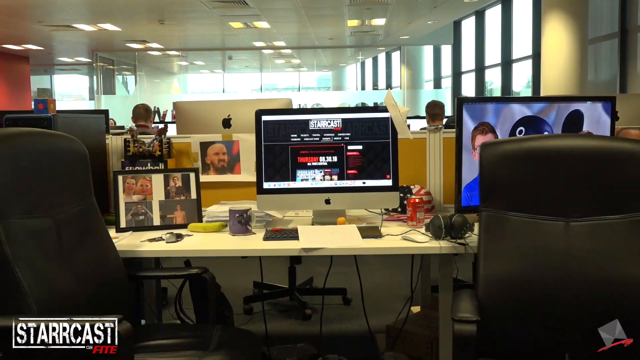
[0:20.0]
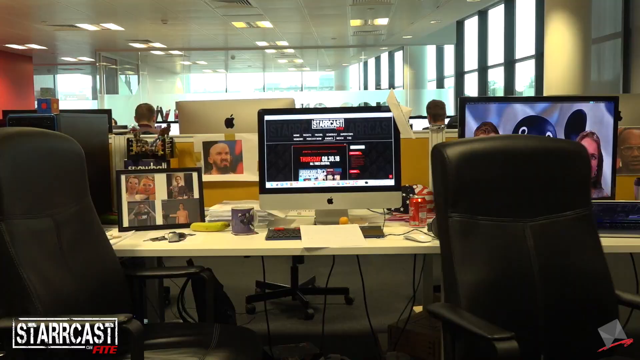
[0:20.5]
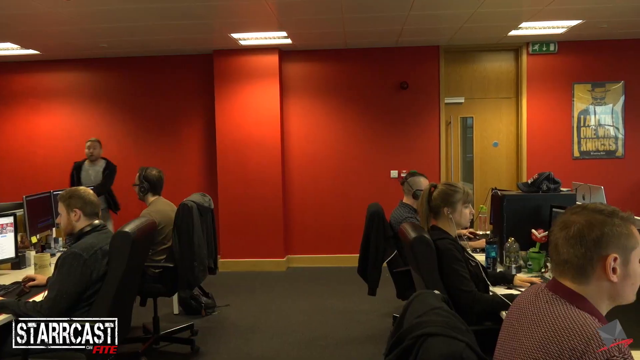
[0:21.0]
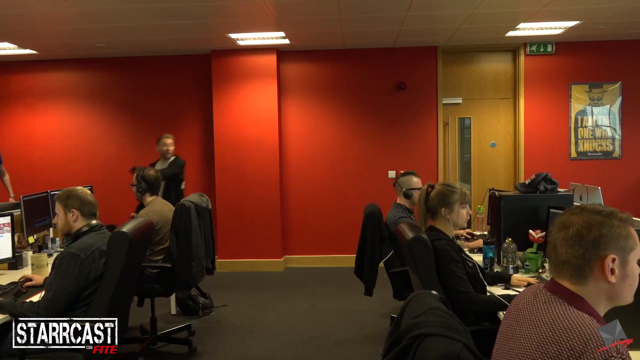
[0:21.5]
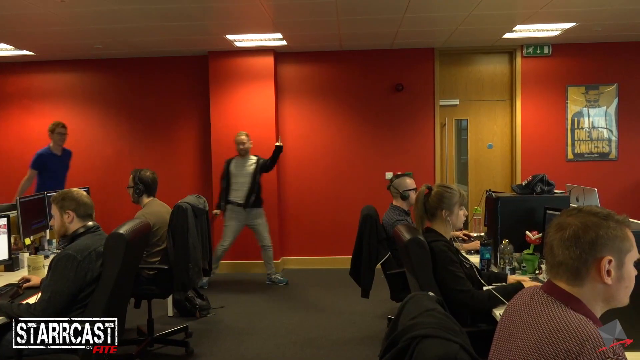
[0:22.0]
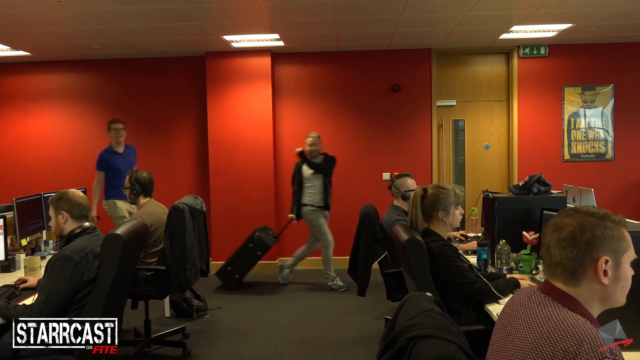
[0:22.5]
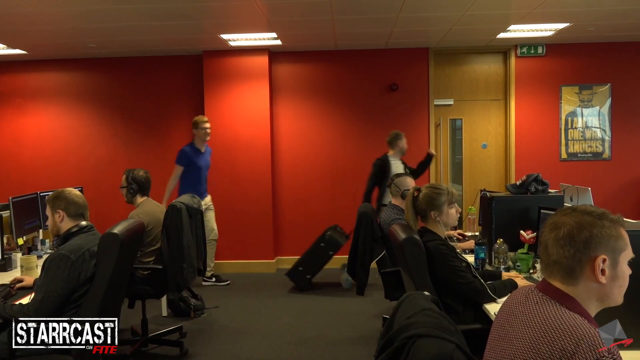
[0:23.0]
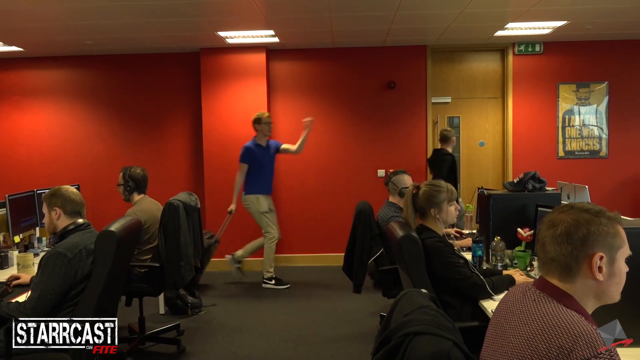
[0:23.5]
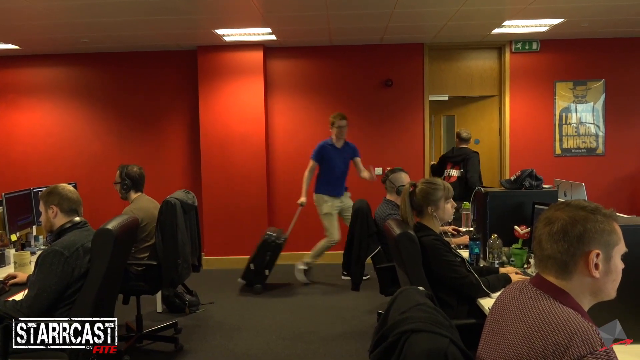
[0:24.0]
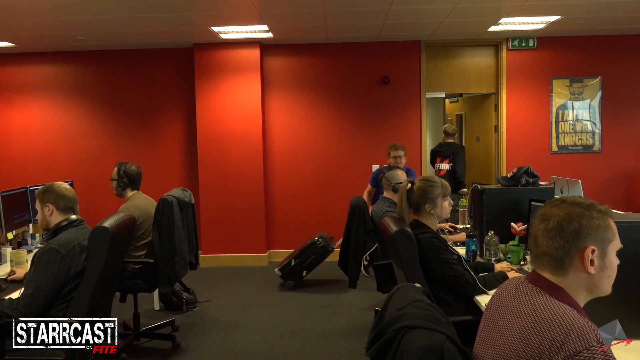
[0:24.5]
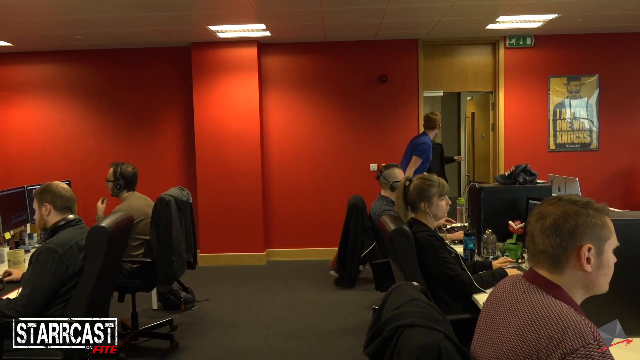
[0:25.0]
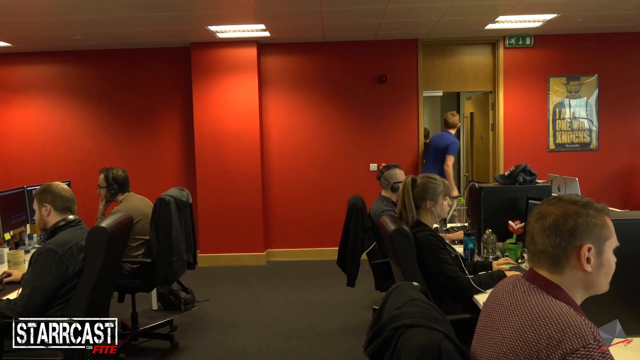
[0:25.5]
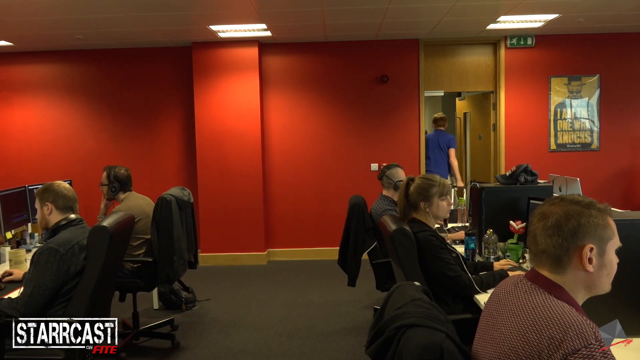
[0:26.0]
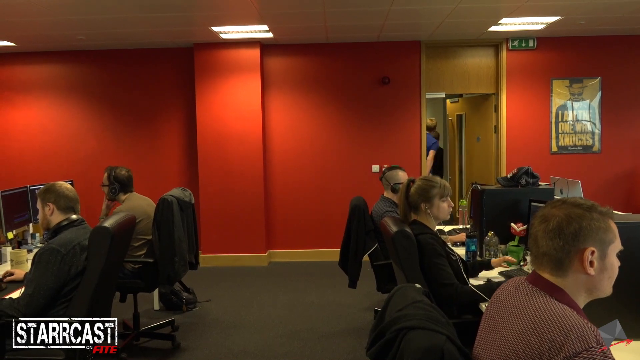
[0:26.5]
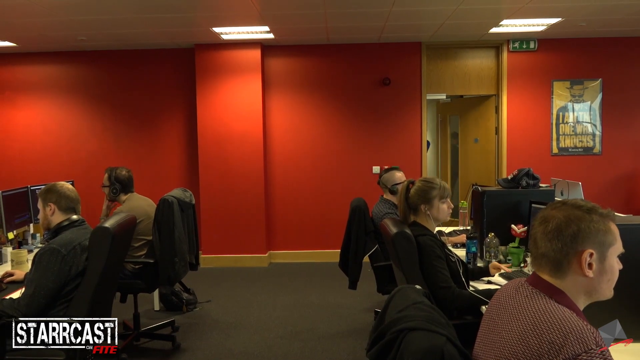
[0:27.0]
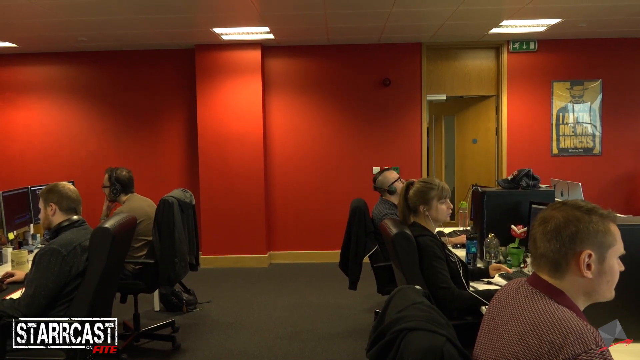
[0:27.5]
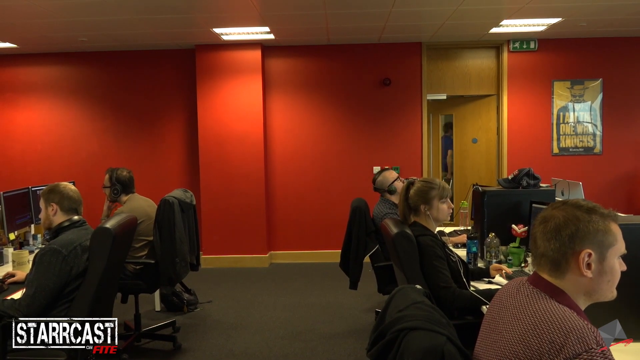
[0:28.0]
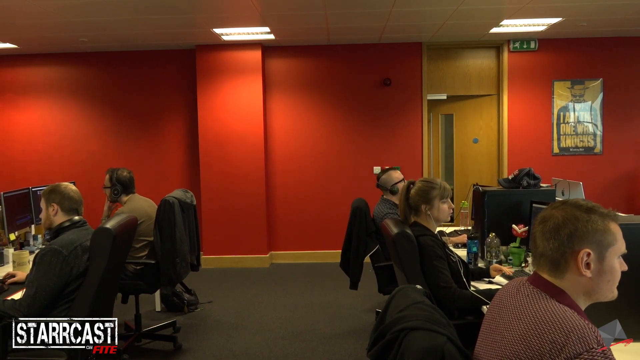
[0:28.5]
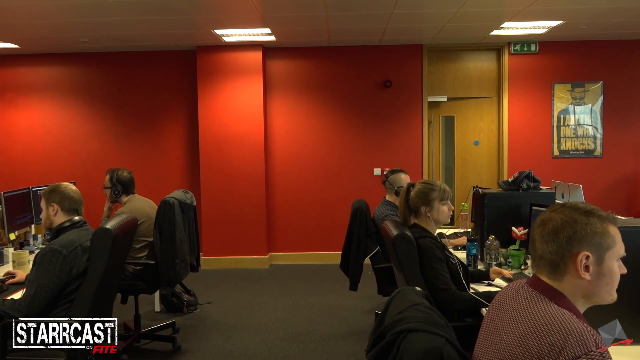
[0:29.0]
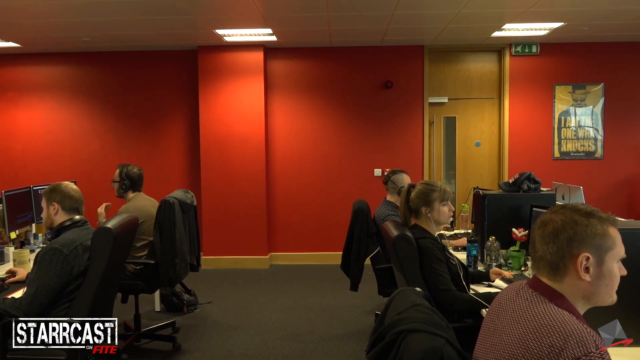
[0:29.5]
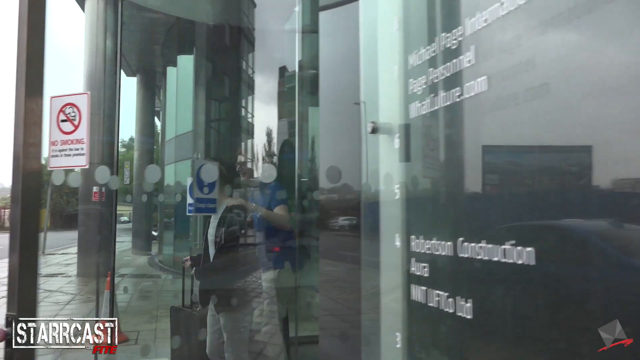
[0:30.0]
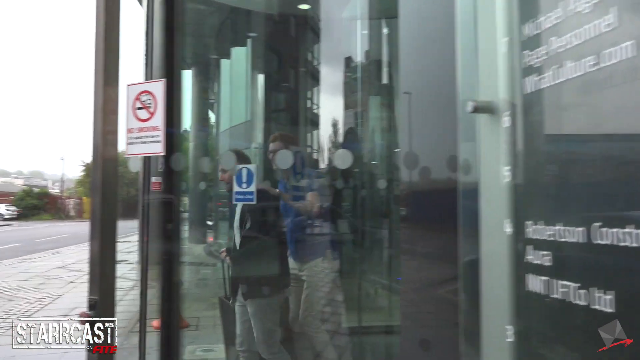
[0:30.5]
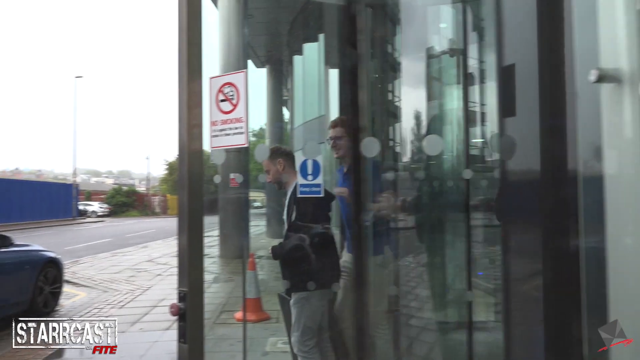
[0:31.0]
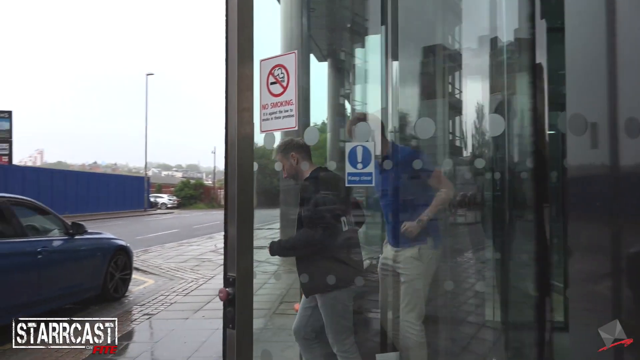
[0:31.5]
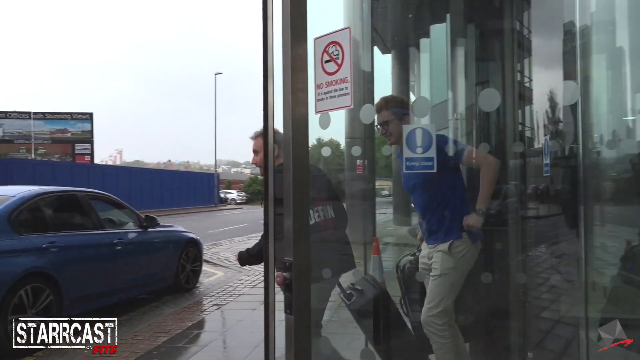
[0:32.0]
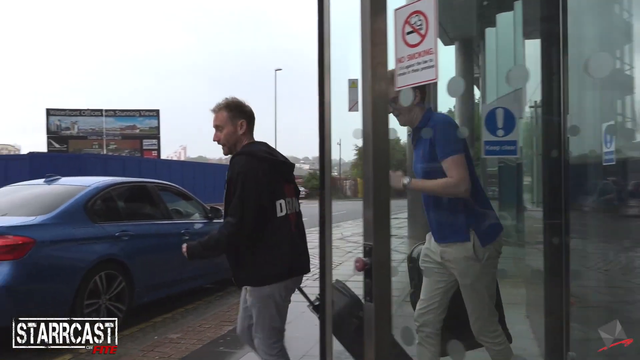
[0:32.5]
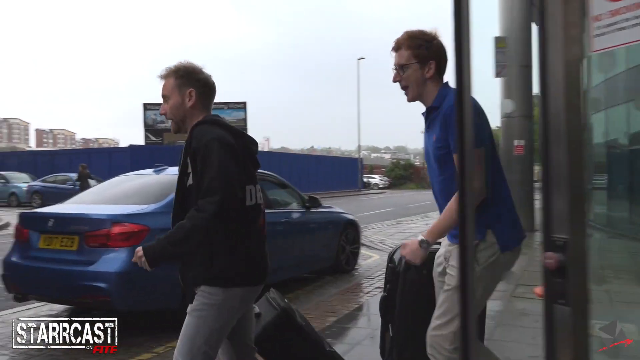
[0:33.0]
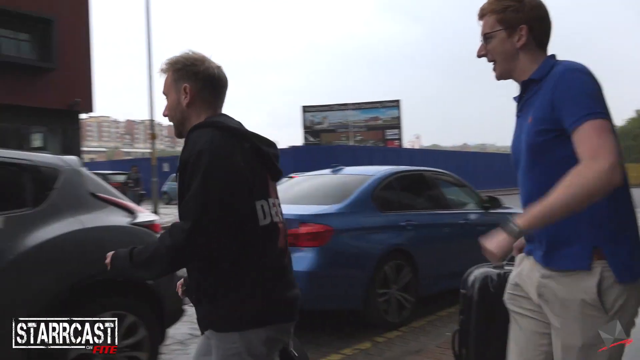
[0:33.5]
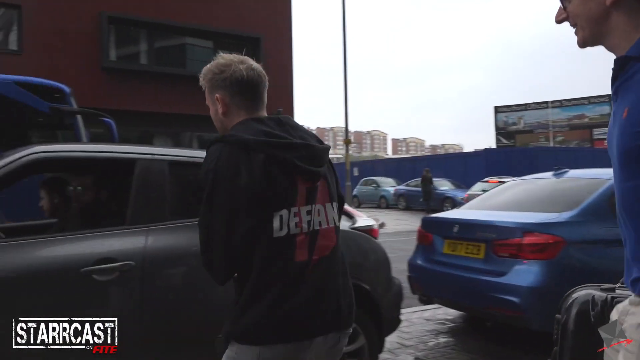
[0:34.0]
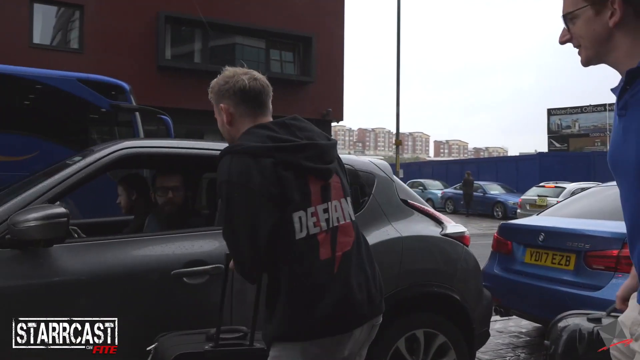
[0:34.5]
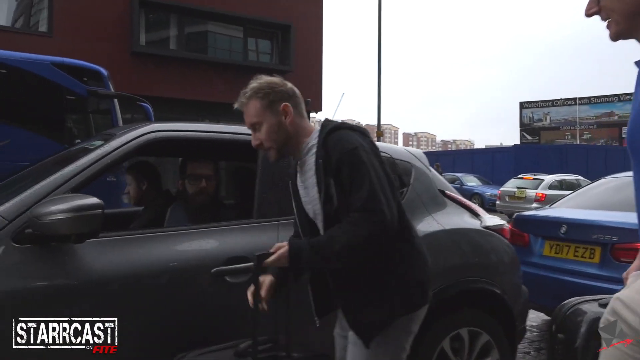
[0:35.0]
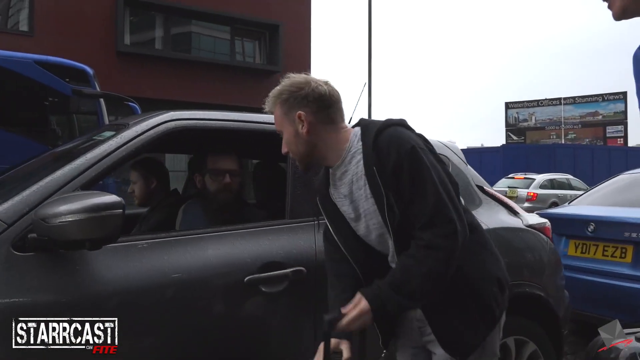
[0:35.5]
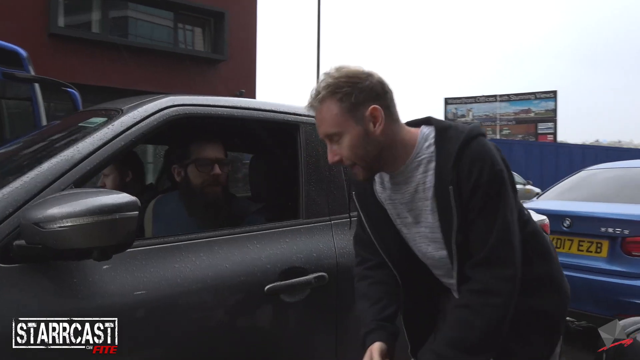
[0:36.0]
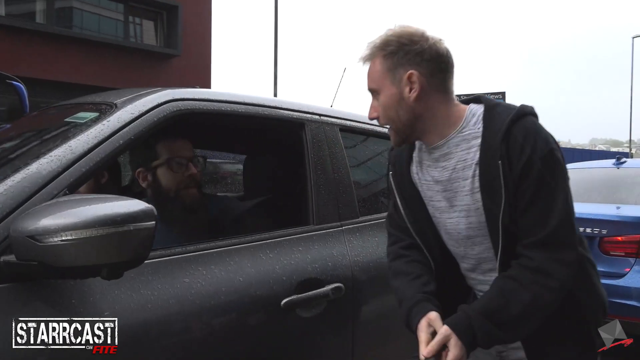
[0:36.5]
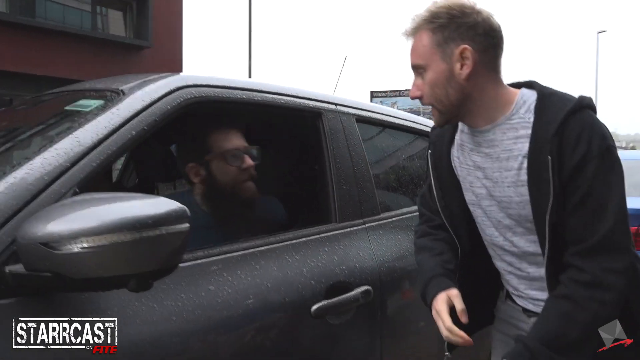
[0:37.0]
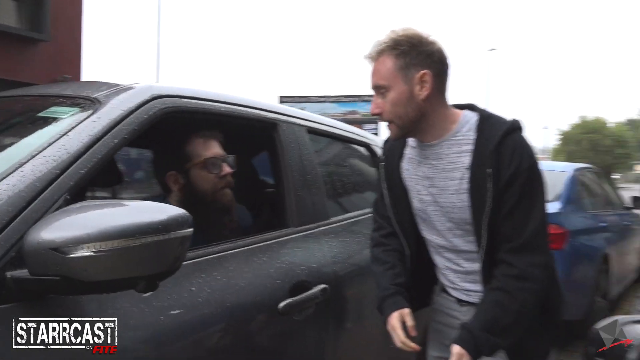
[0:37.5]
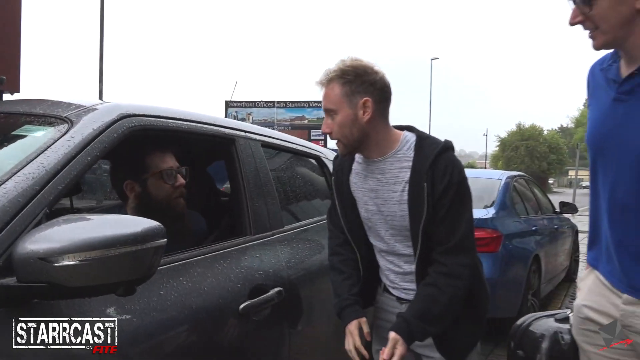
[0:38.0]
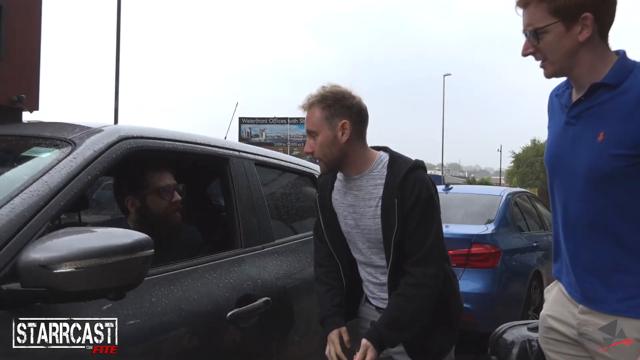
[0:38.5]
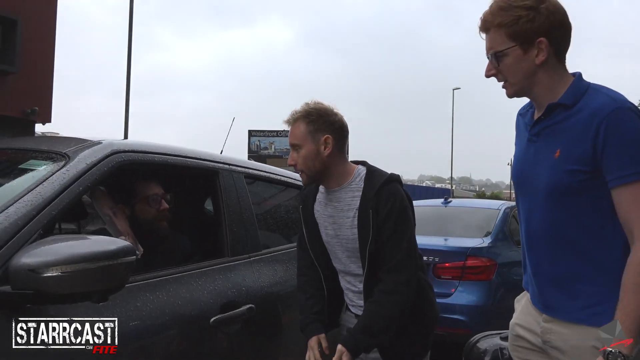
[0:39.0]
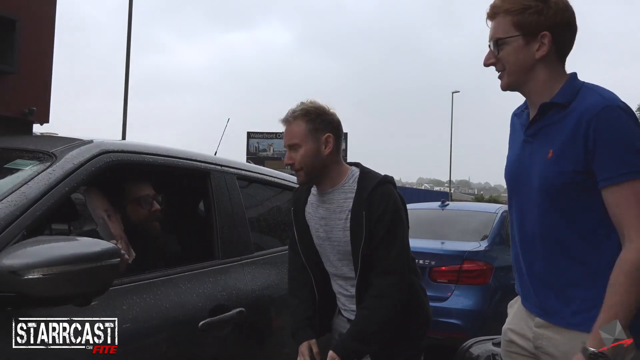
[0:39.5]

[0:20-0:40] In an office, two chairs are still moving, just vacated by two men. The men have suitcases and wave goodbye to a very large group. Rows of people work at computers, but nobody looks at the two men waving goodbye. They roll out their suitcases, leave through the exit door inside, and come out through a round, rotating glass door. Outside, they talk to a man waiting in a car, and they appear to agree on something; he may be an Uber driver. The scene is a city, with tall buildings in the distance. The street they are on is shorter and quieter, and across it is a building that is not a skyscraper.